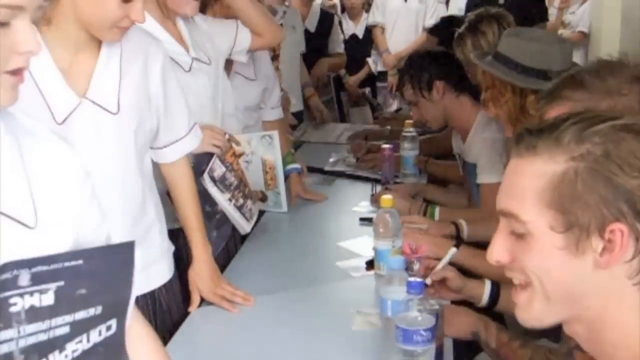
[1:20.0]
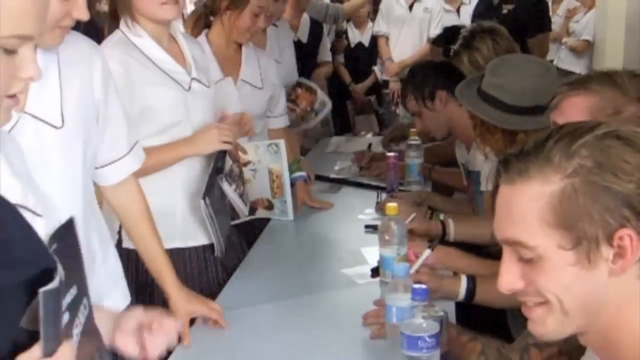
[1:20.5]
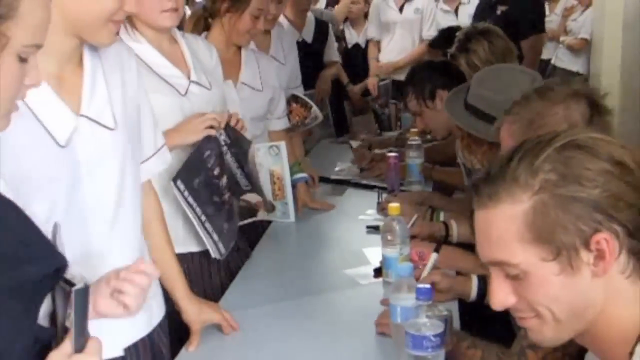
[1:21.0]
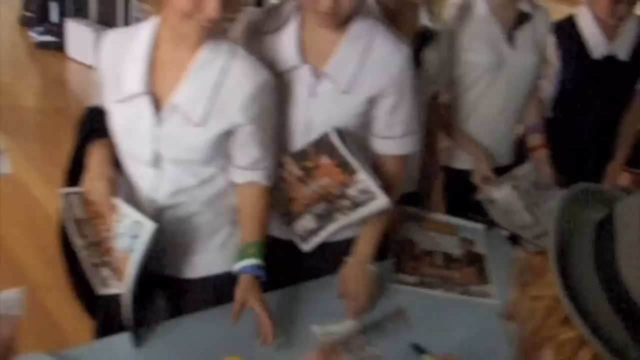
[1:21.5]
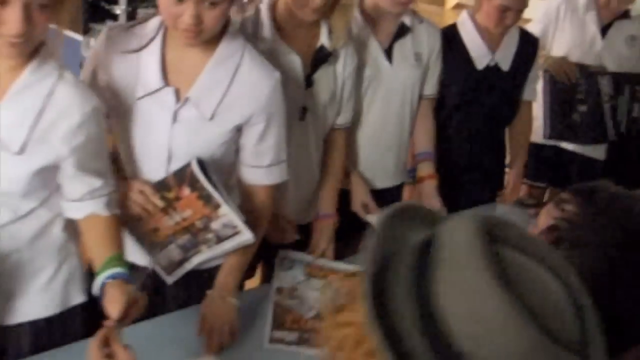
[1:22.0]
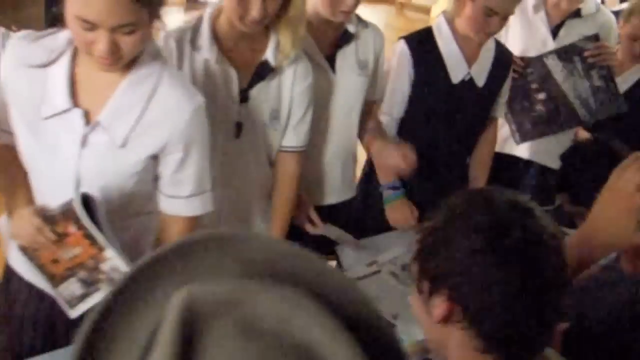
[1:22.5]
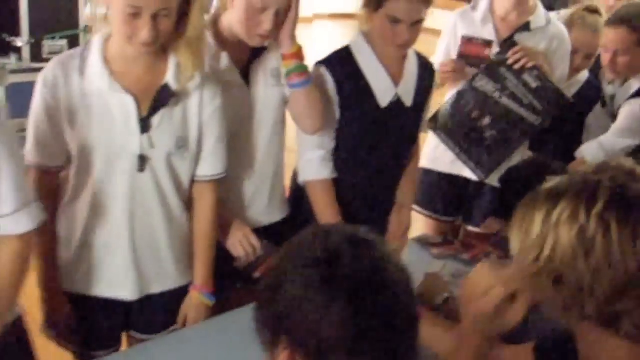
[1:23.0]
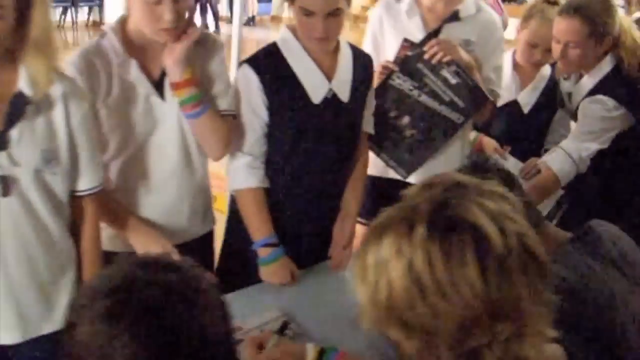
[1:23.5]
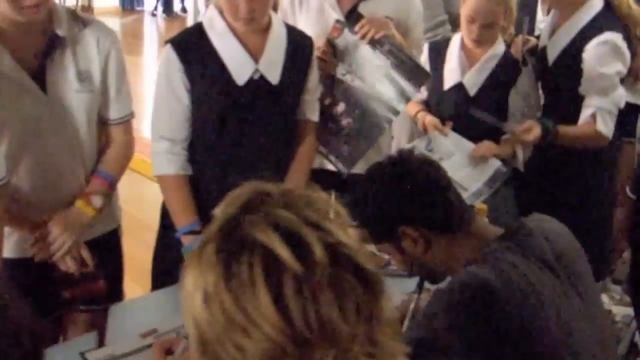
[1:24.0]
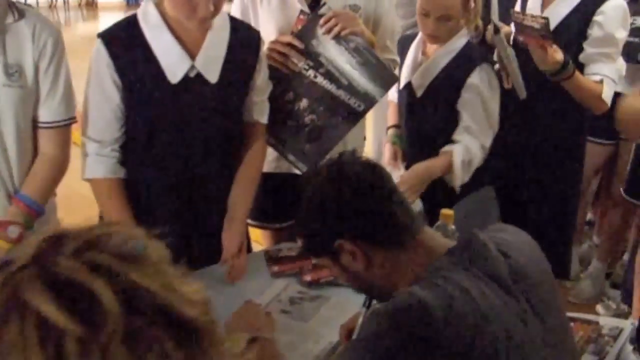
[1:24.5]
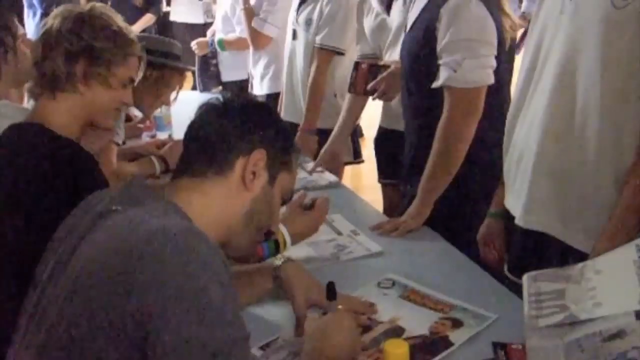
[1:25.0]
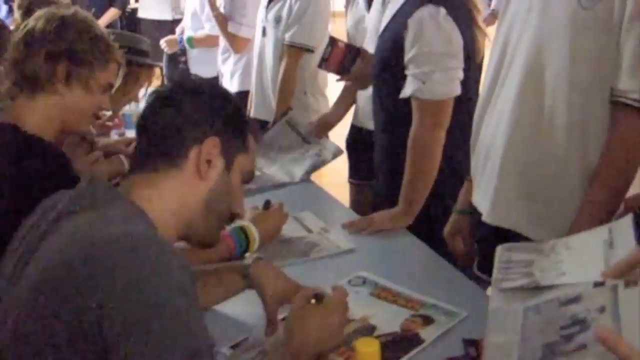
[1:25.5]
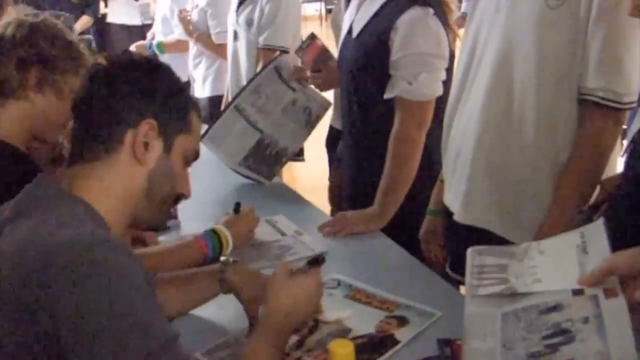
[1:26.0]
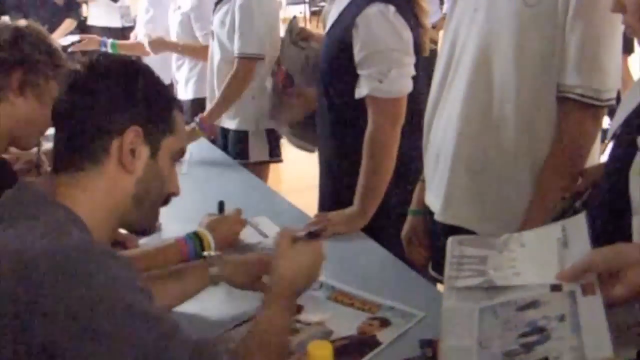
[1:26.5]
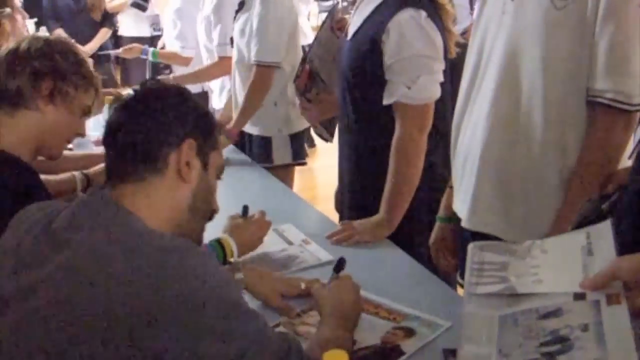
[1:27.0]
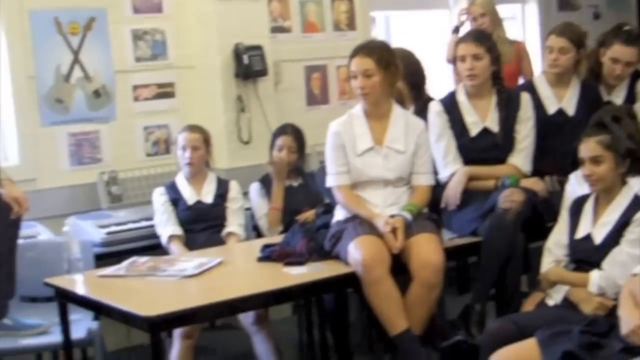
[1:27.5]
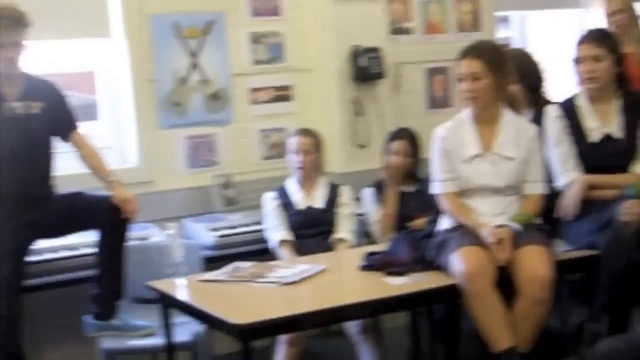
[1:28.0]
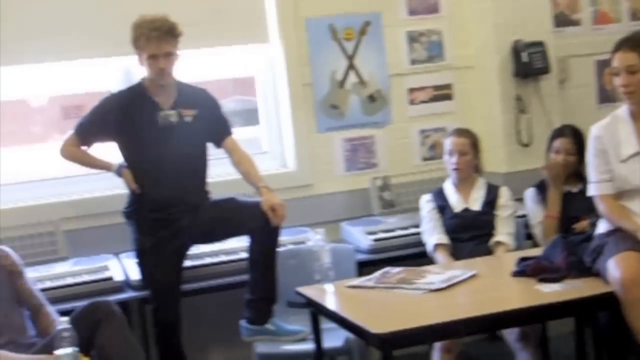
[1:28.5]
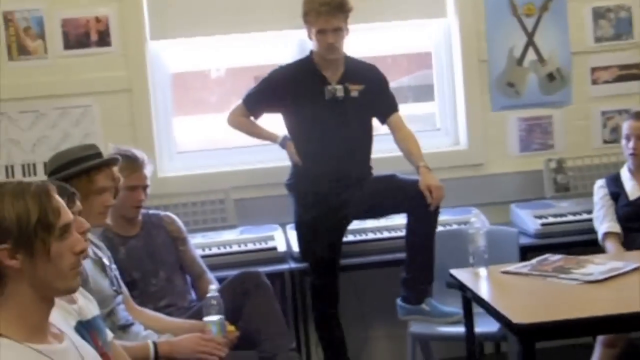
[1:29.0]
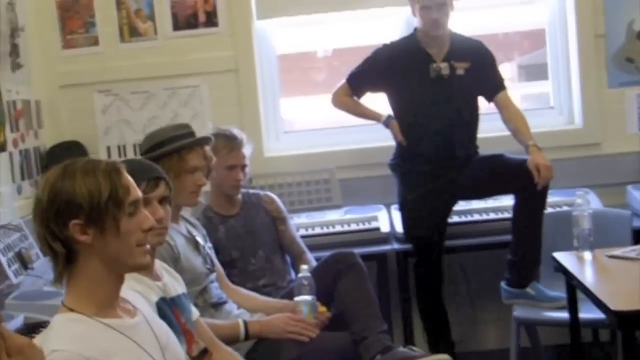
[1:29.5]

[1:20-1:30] People from the audience are lined up at a gray table where the men from the rock band sign autographs on things like small photographs, images or programs. Bottles of water are on the table in front of the young men as they sign. Some of the women seem to hold something like a program or a kind of slick booklet or magazine, apparently with pictures of the band members for them to sign.